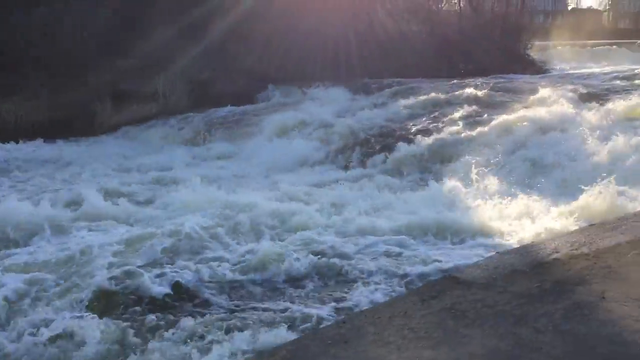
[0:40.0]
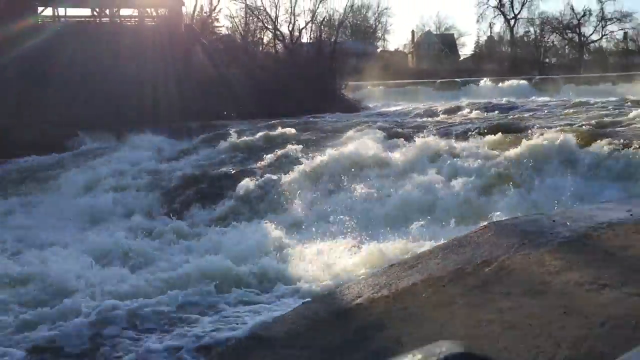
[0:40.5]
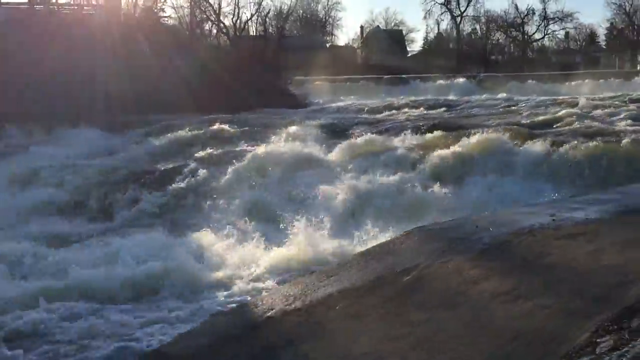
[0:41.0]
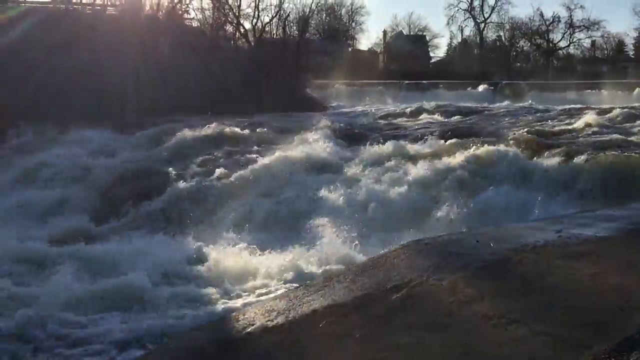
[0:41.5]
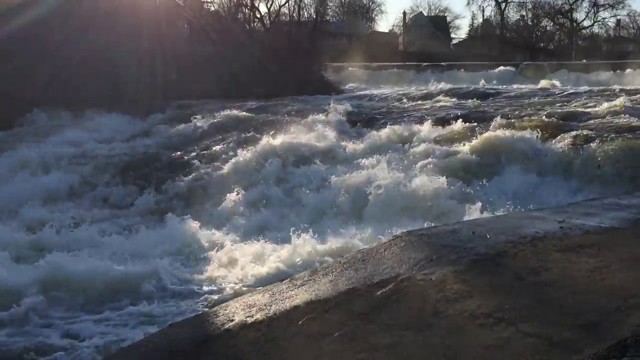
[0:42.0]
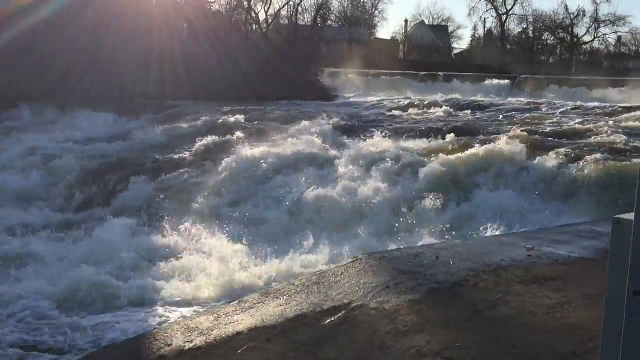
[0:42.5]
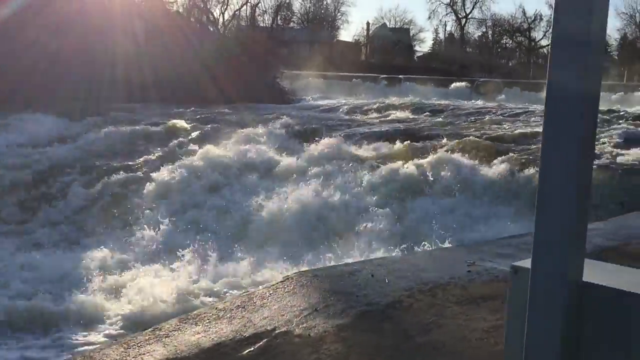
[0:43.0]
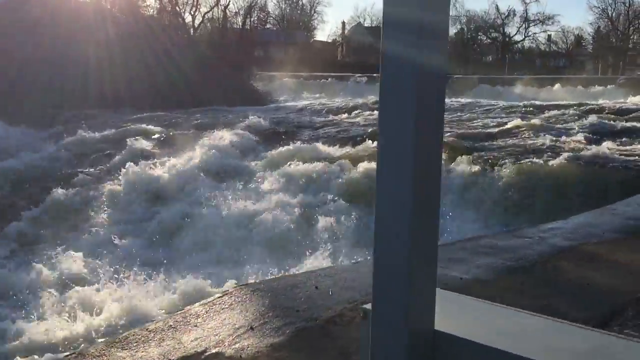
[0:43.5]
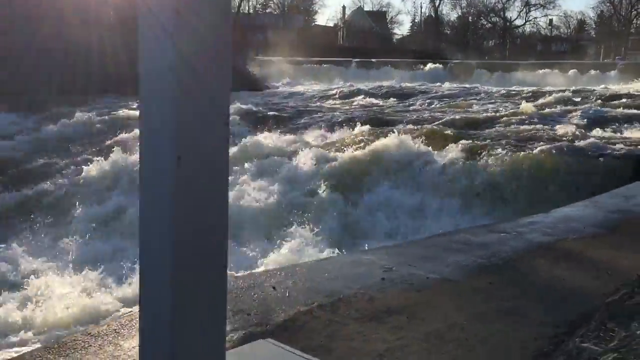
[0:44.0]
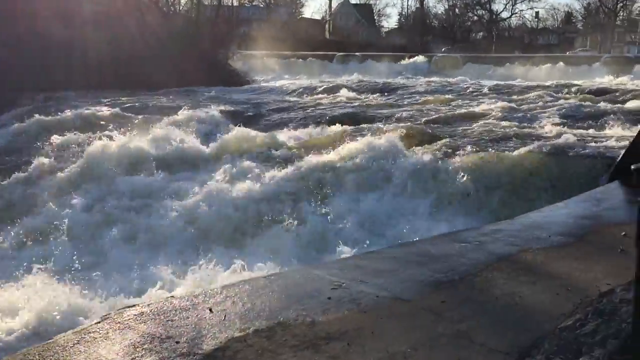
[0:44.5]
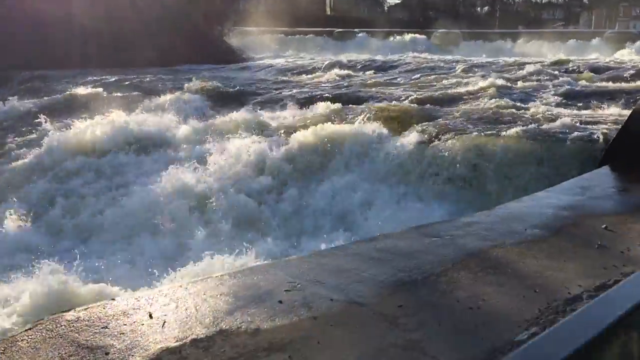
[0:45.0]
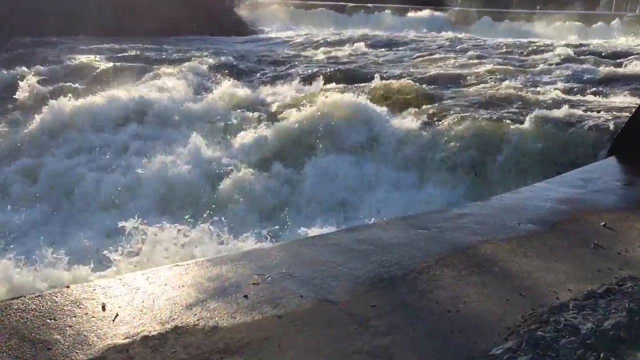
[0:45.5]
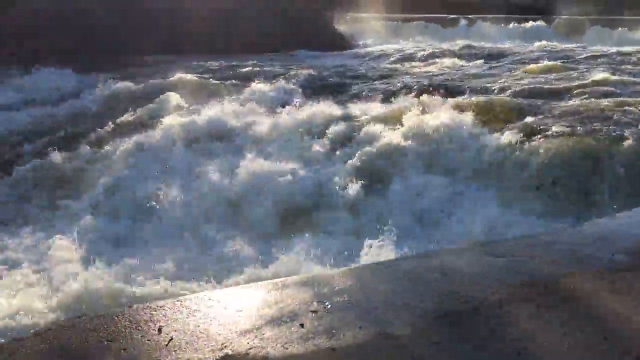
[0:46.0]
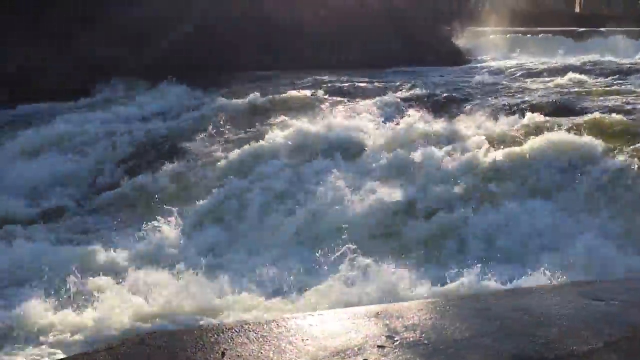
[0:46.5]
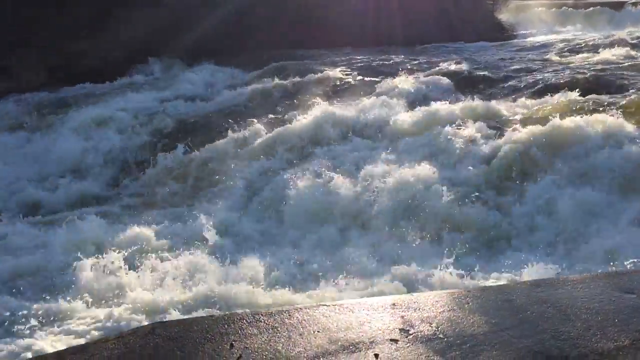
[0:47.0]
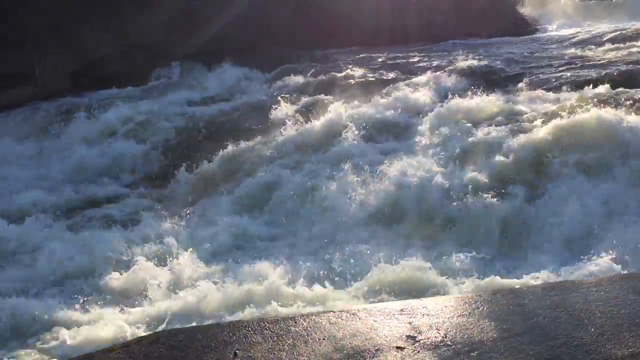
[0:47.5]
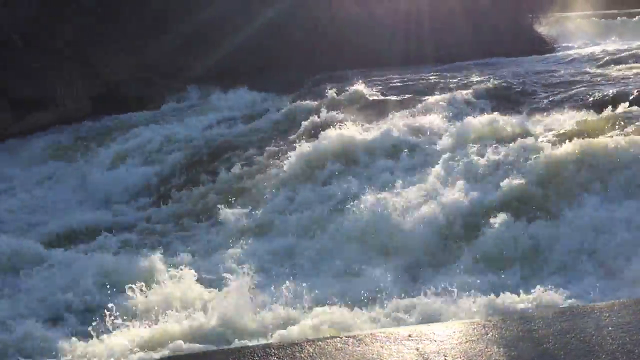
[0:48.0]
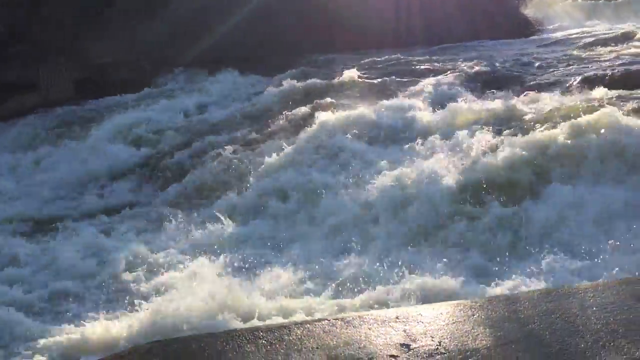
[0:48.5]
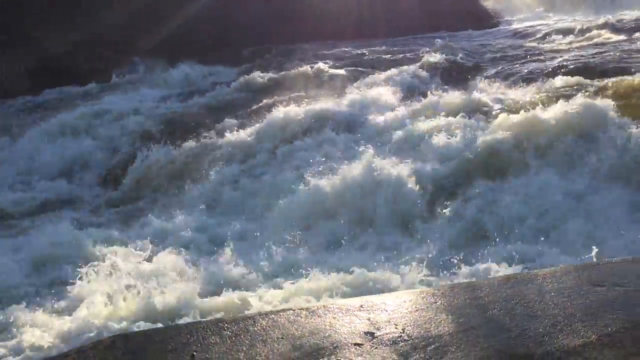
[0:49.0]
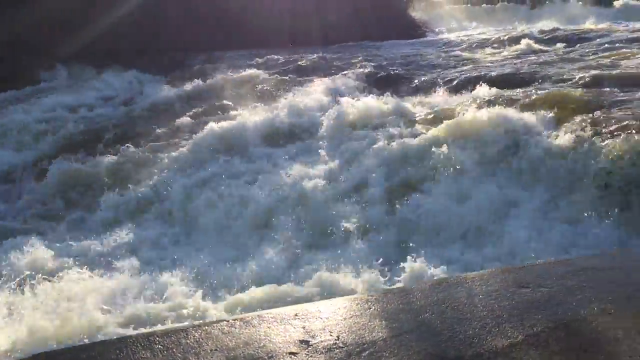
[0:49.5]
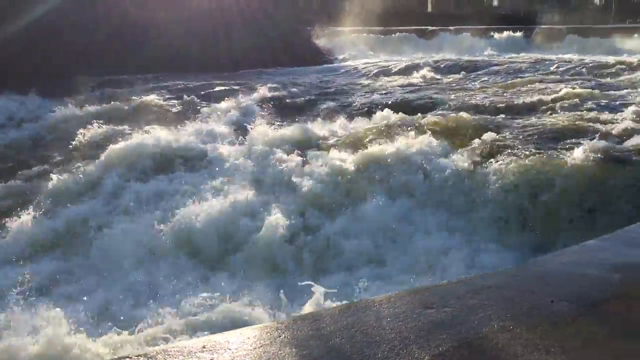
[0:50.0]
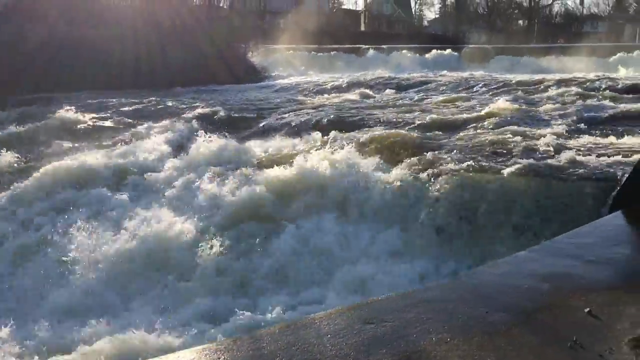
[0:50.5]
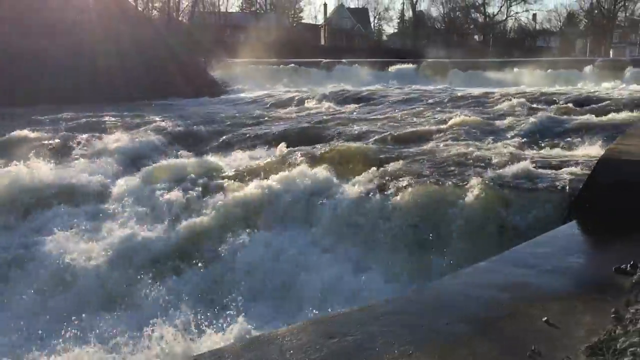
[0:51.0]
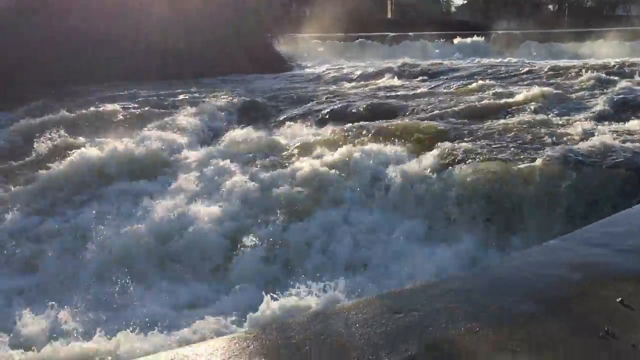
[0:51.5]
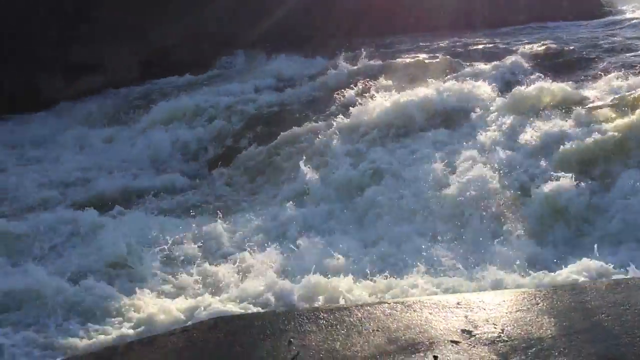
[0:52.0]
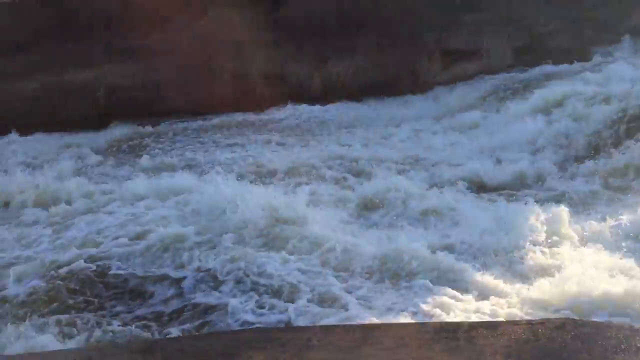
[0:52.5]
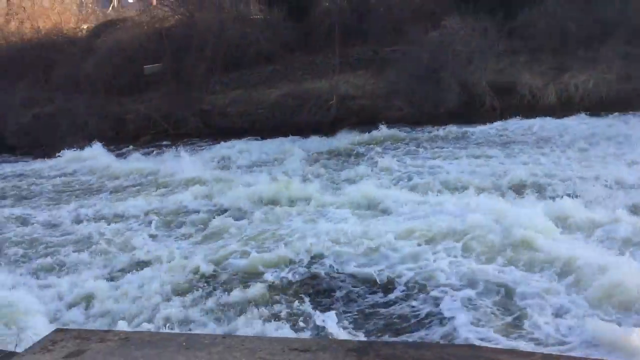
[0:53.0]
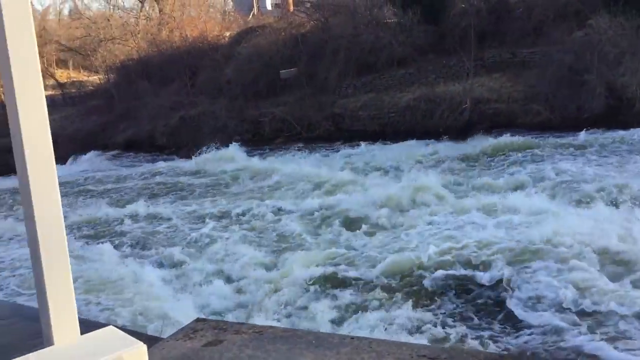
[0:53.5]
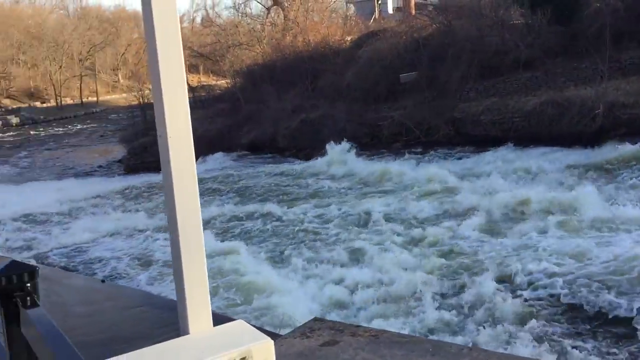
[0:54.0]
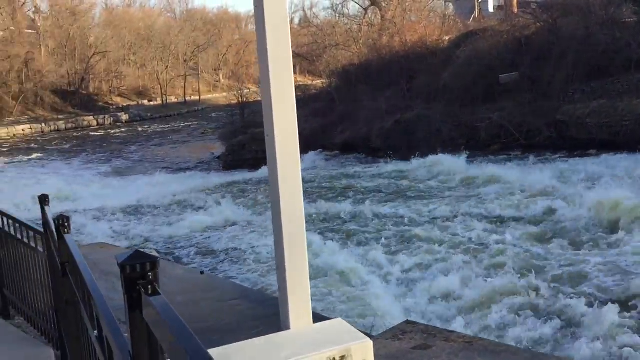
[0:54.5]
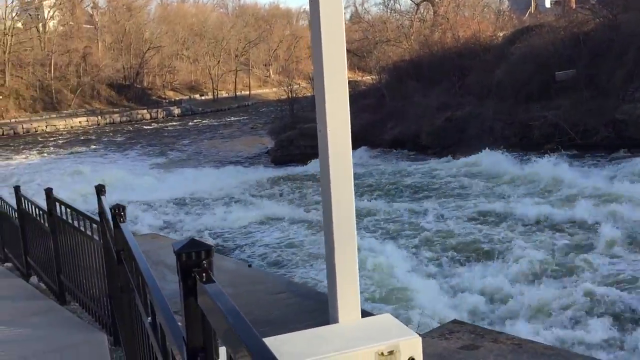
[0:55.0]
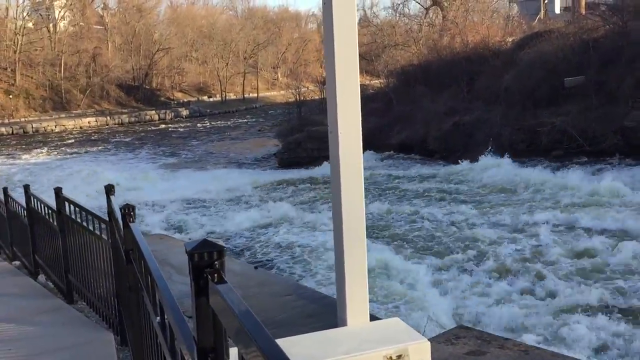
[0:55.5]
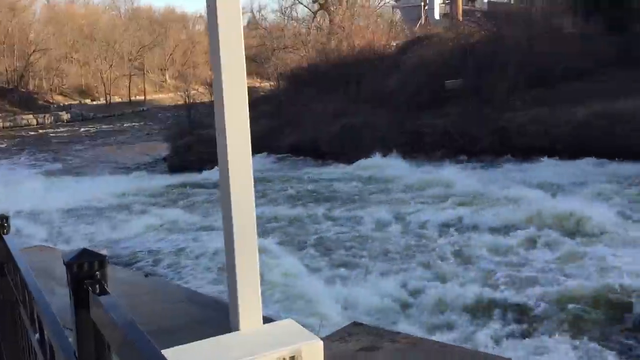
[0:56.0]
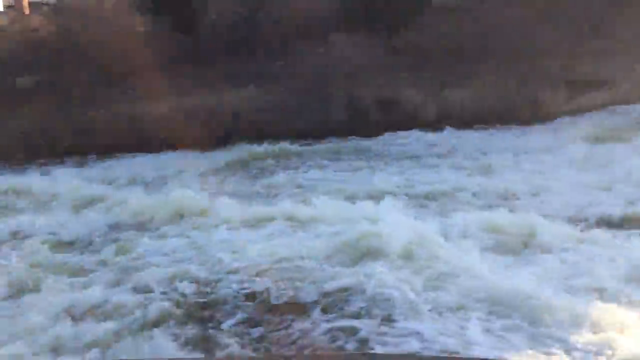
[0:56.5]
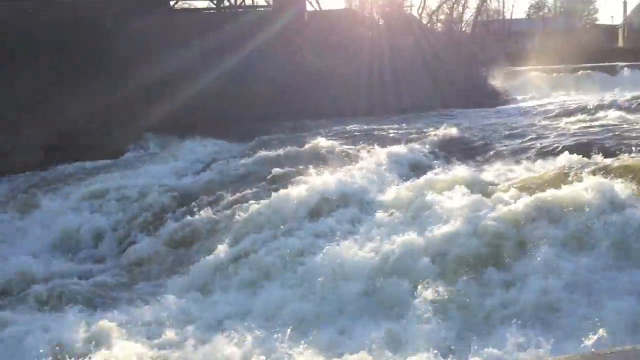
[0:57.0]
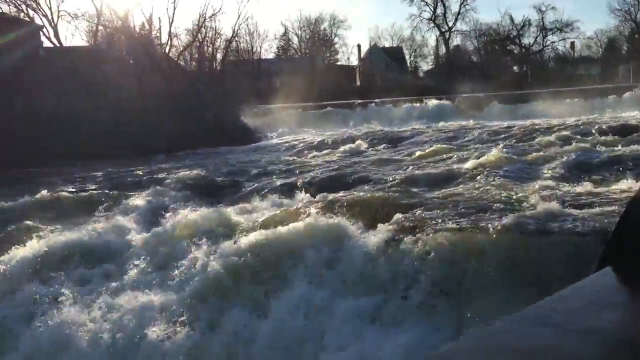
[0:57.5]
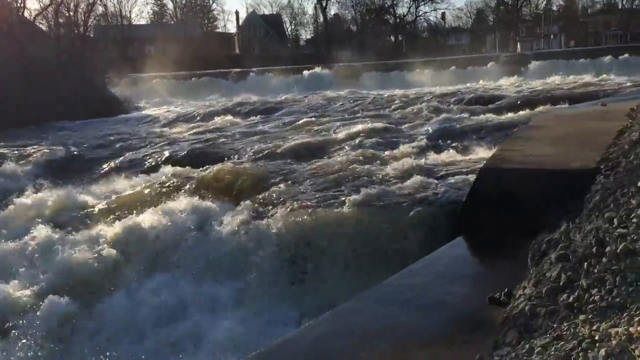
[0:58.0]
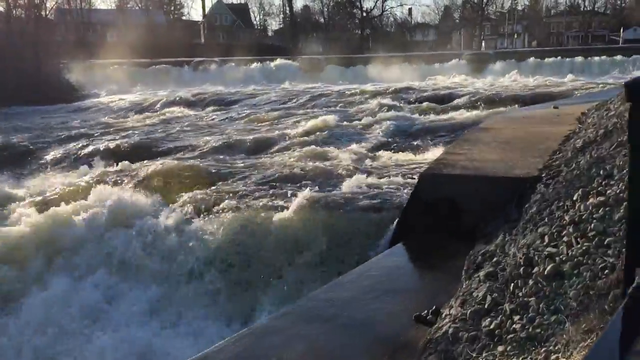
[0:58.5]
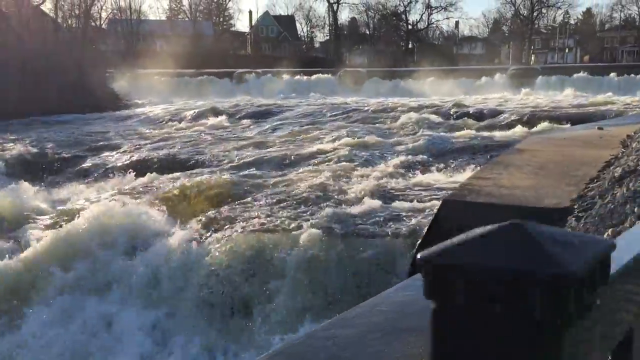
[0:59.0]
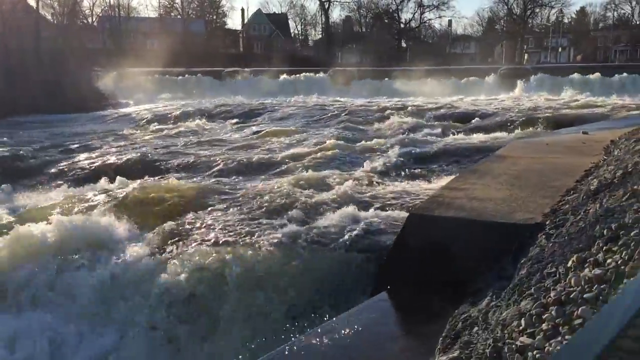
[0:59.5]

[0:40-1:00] Sunlight beams through the building and onto the back part of the water. Droplets spring up into the air above the rocks the water flows through, and water seems to be rushing by the bridge in the background. The person then pans to the left, showing the part of the river filmed earlier. More of the metal fence is visible, along with a post that is maybe for a light or sign. The water bends and flows down a corner and seems to get calmer as it goes on. There also seems to be a road or small path where the river bends to the right. To the right of the river is another building that seems newer and has a modern look.